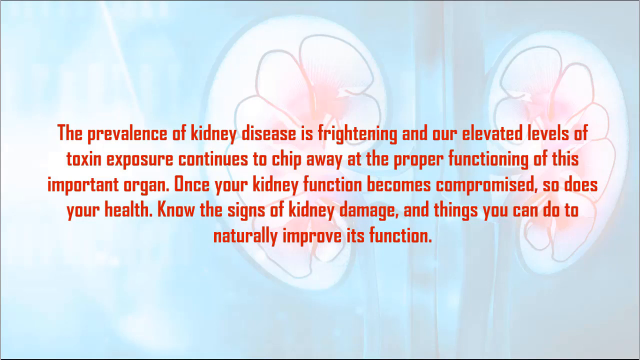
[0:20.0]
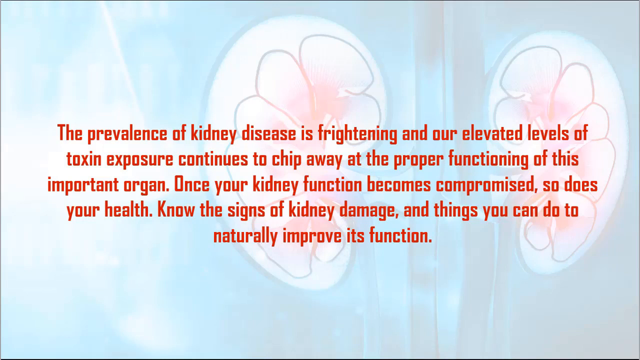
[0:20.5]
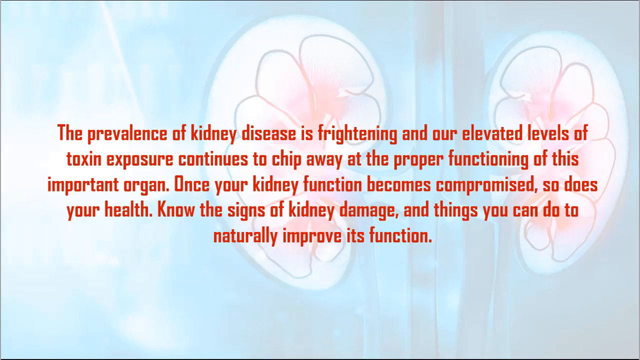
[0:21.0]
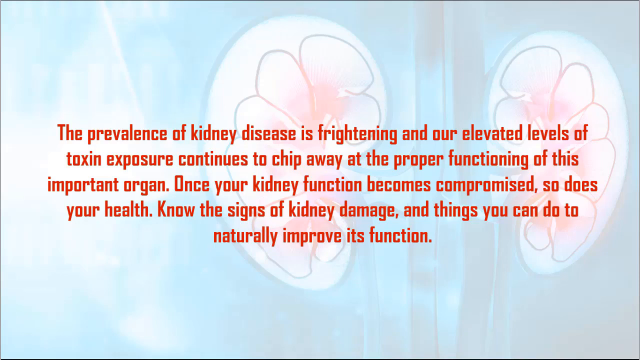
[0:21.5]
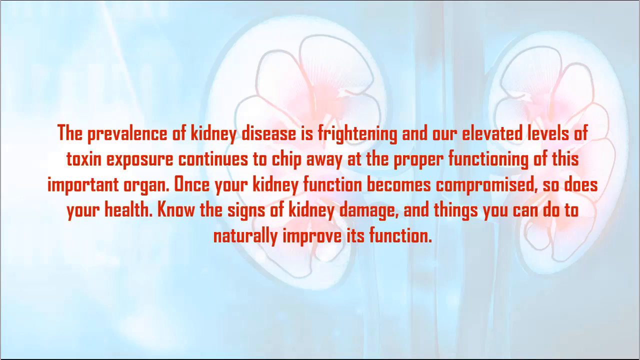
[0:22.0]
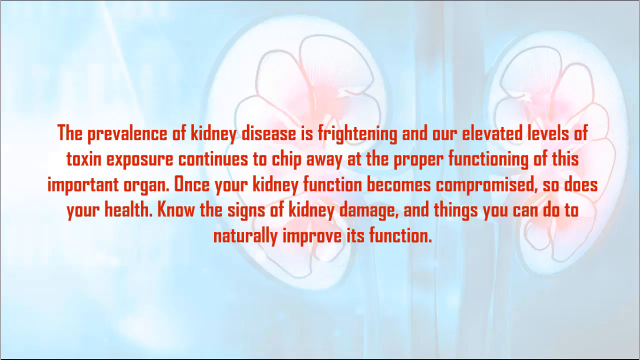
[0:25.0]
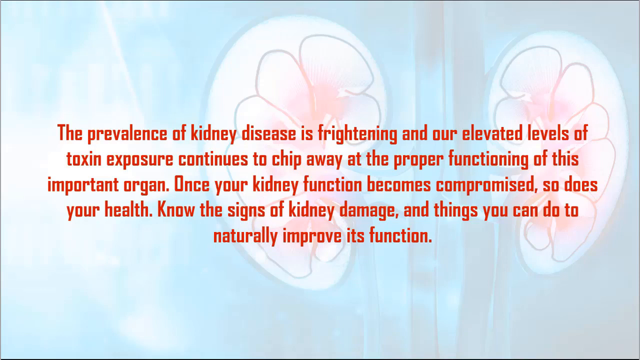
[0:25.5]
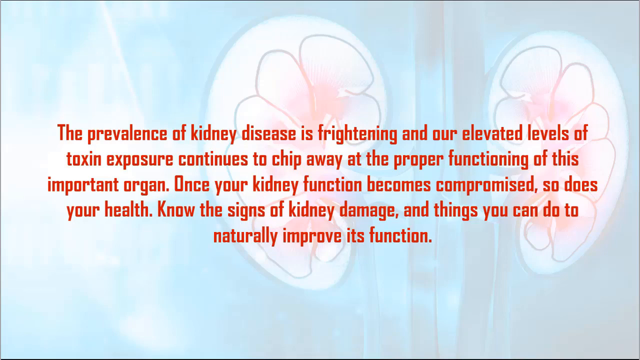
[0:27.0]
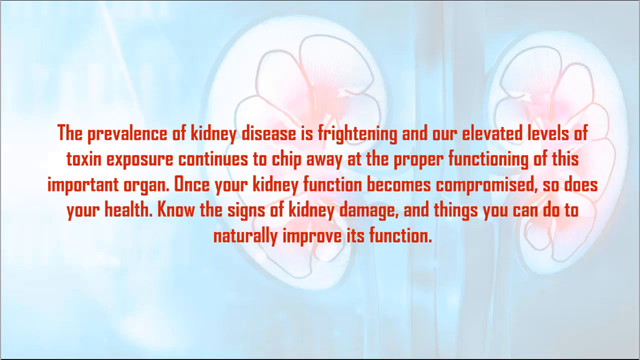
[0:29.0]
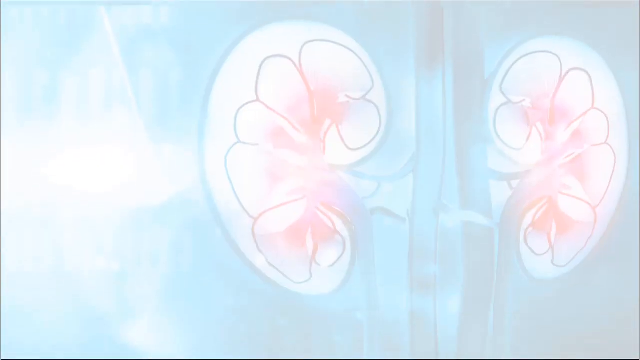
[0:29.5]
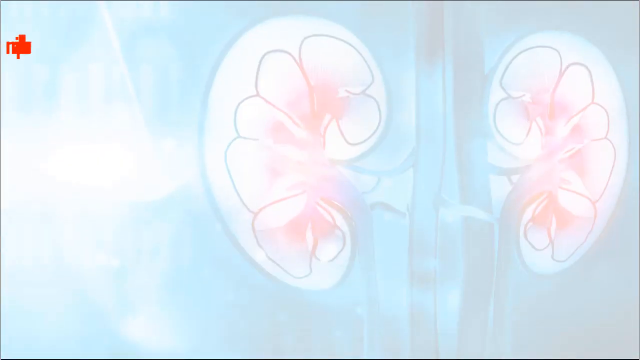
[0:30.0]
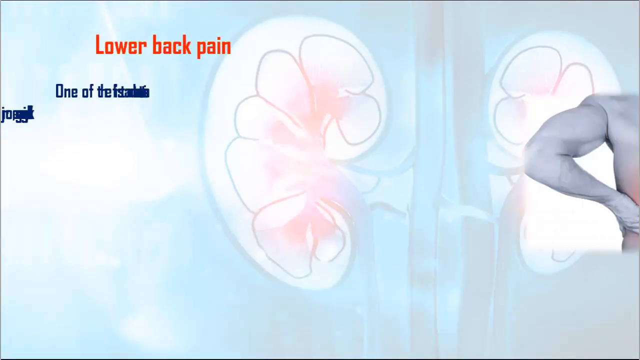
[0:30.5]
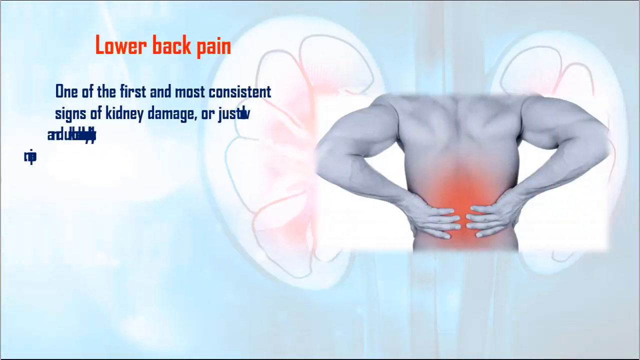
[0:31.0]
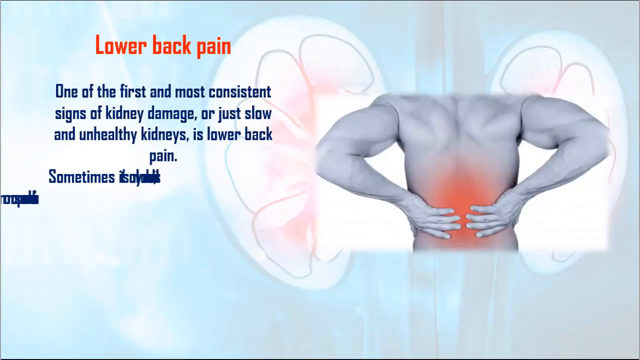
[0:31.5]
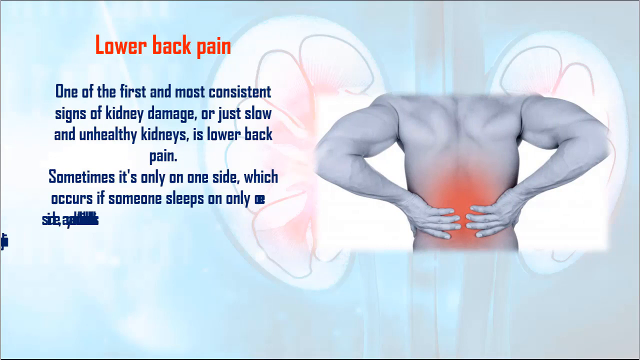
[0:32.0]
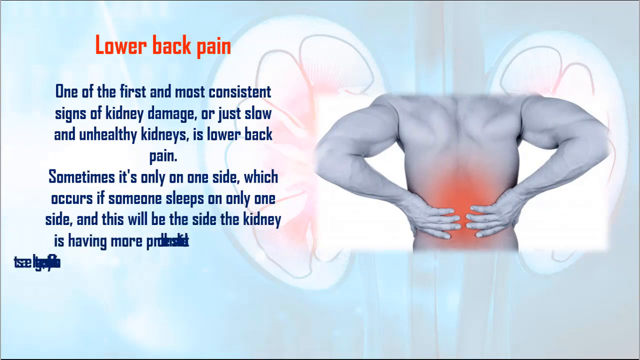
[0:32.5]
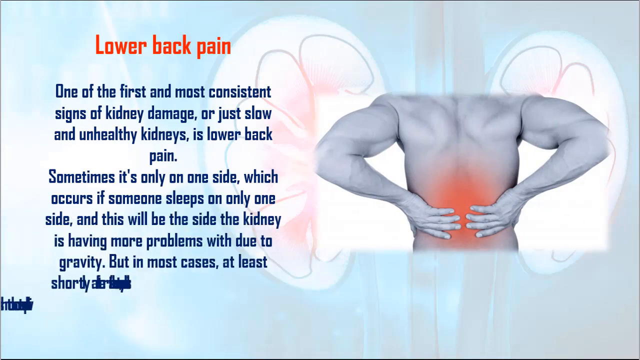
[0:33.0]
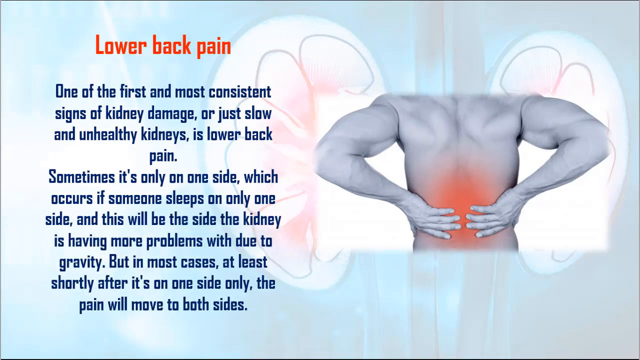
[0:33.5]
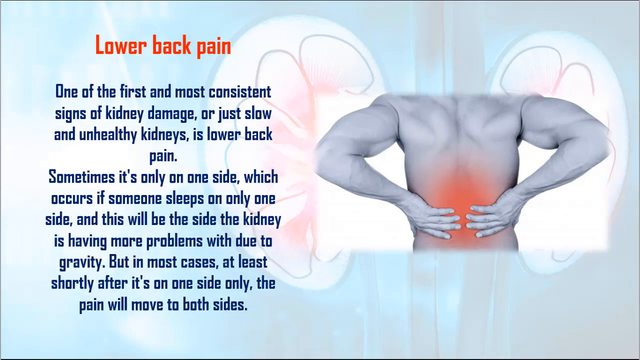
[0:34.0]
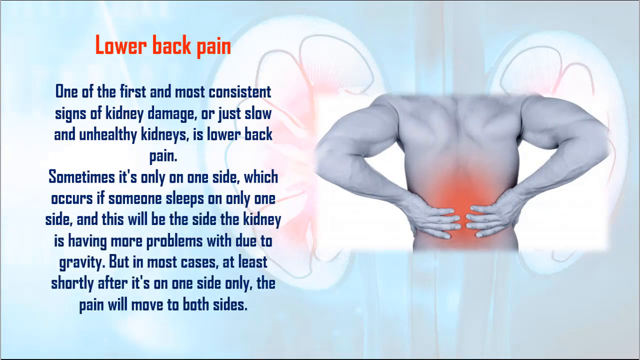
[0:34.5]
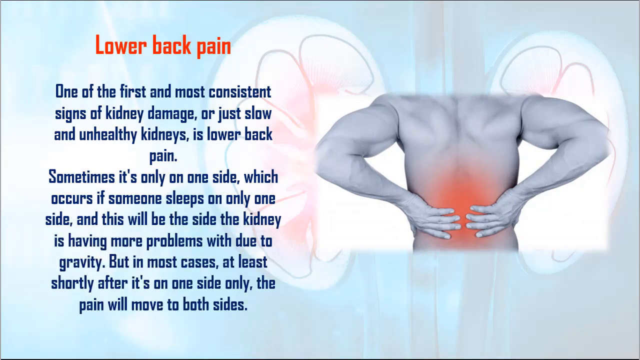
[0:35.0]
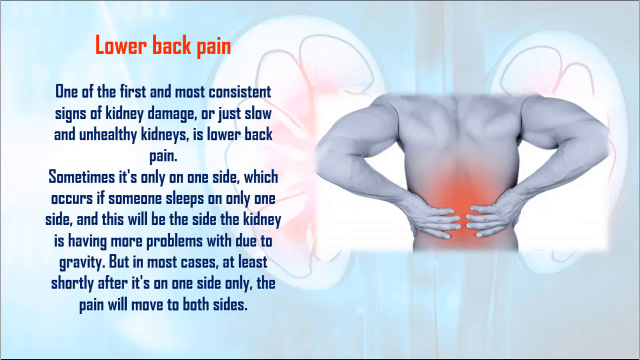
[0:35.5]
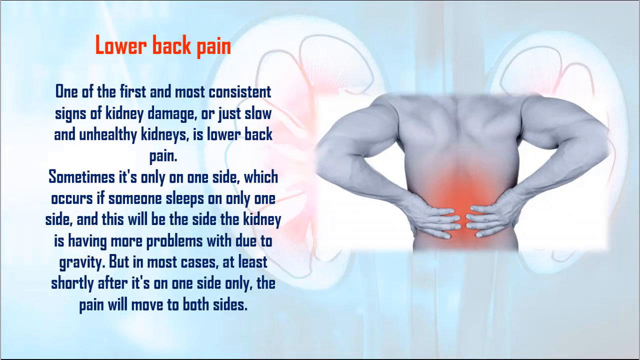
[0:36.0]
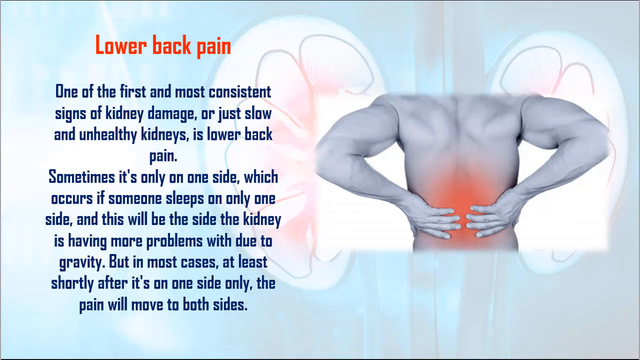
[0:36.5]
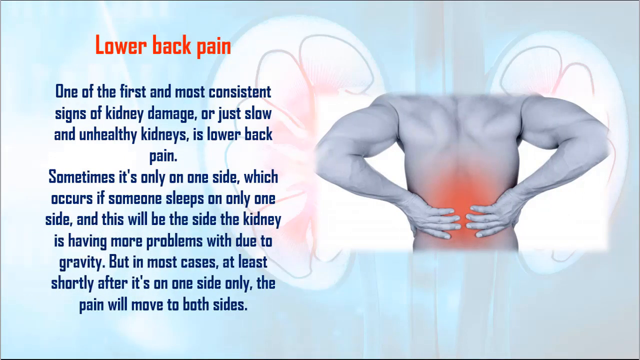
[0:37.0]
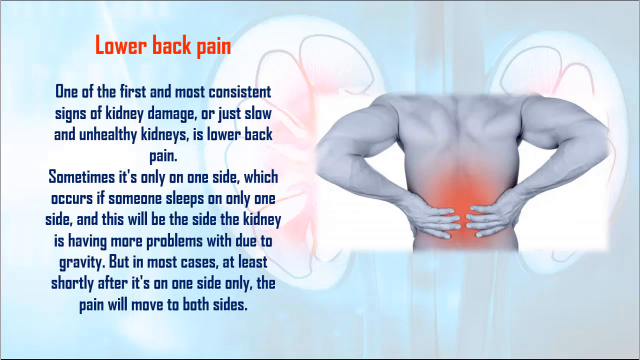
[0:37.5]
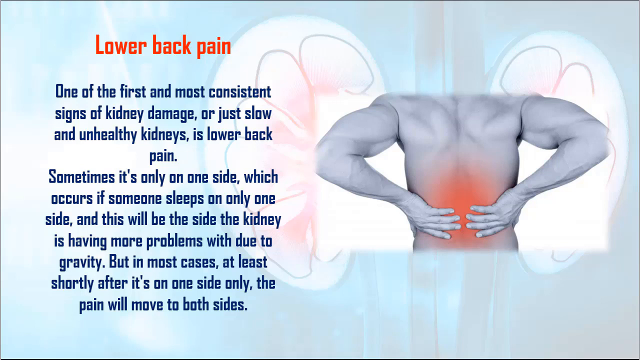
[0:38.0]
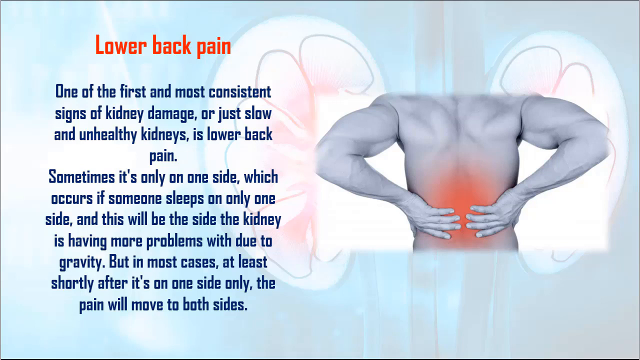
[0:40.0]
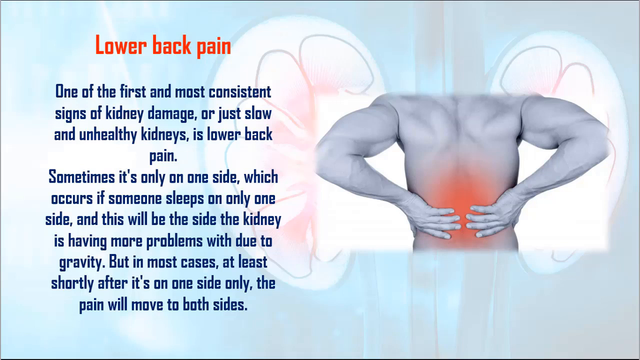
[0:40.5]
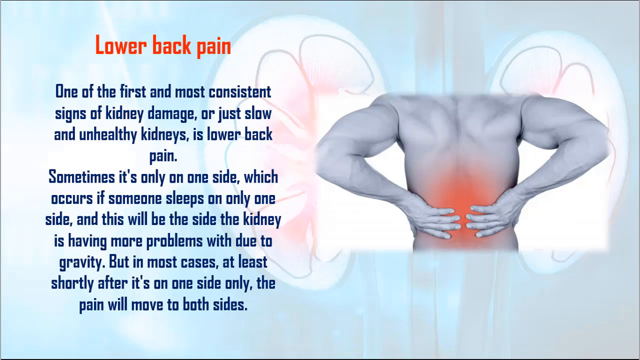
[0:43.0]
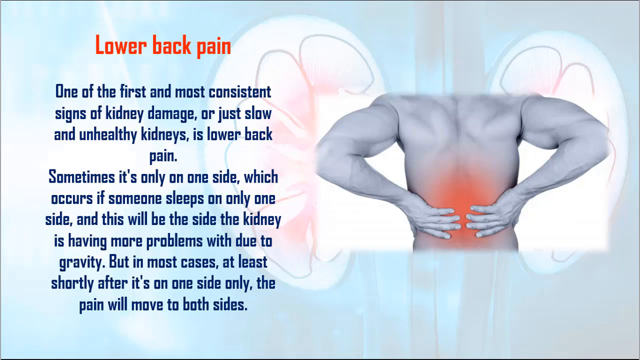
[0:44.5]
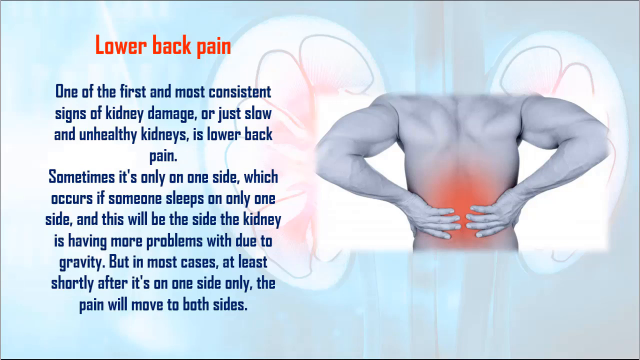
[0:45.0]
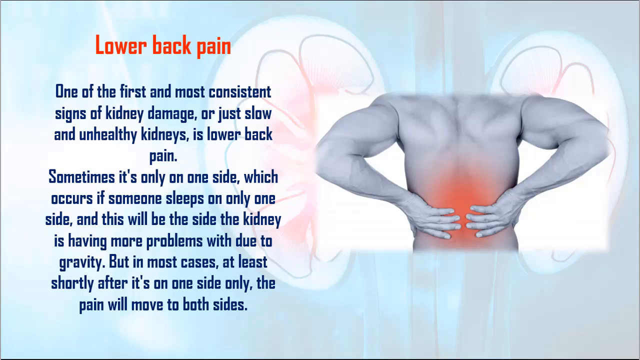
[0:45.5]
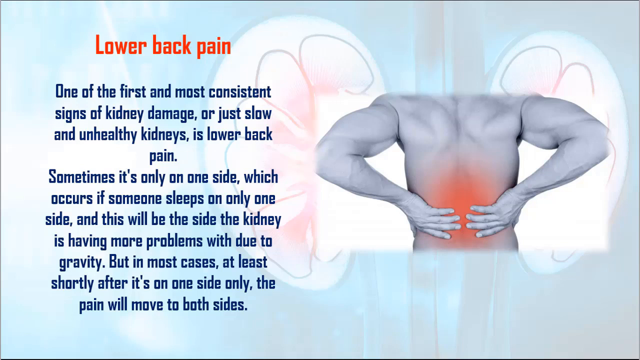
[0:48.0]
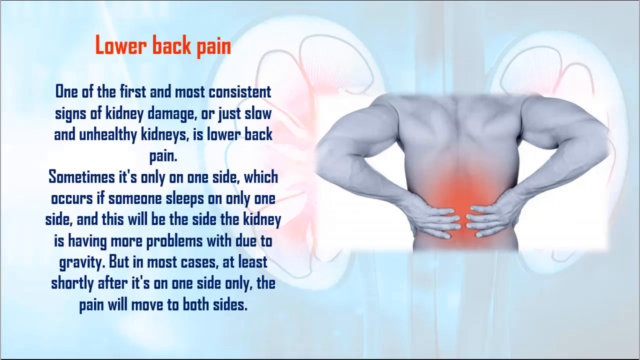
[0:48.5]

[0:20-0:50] A drawing of two kidneys is shown on a mostly blue background mixed with white. The kidneys are mostly white with areas of pink in the center and multiple curves drawn in black inside them. Two mostly blue tubes are in the center between the two kidneys. In the center of the picture is red text about the prevalence of kidney disease and how frightening it is. The video then transitions: with the kidney picture still in the background, text slides from left to right and appears on the left section of the screen. On the right side is a picture, against a white background, of a shirtless man seen from the back, holding his lower back with his hands; there is a red area on his lower back. The text on the left is about lower back pain, stating that the most consistent sign of kidney damage is lower back pain. The video stays on this picture for a few seconds.